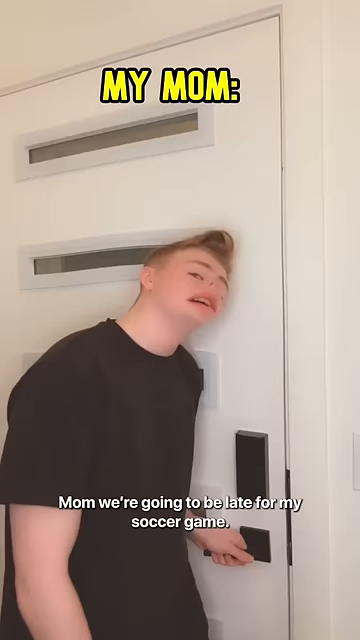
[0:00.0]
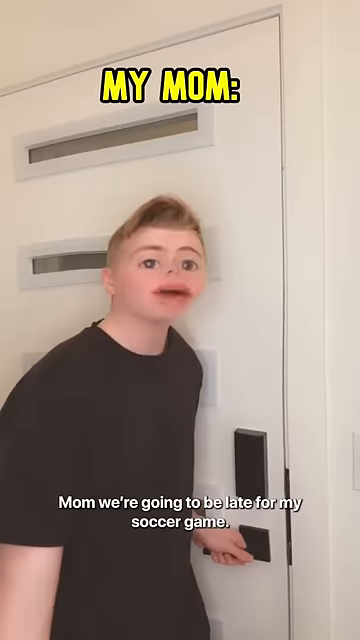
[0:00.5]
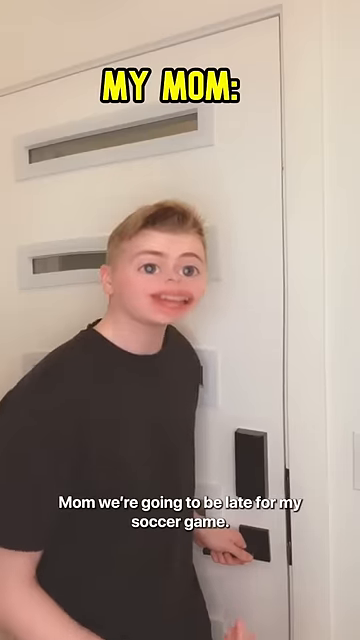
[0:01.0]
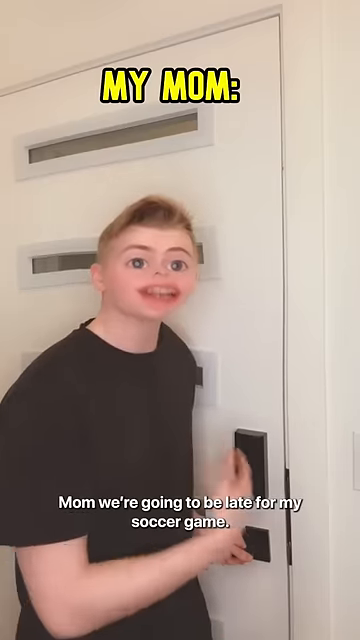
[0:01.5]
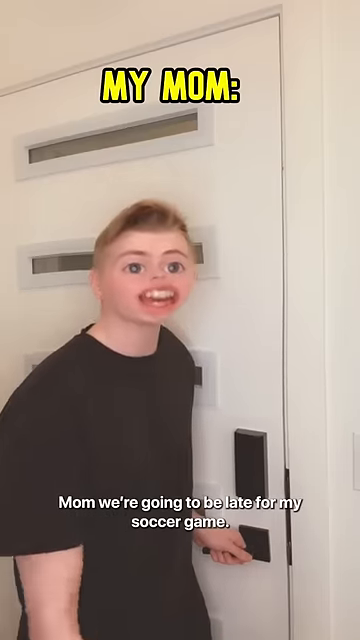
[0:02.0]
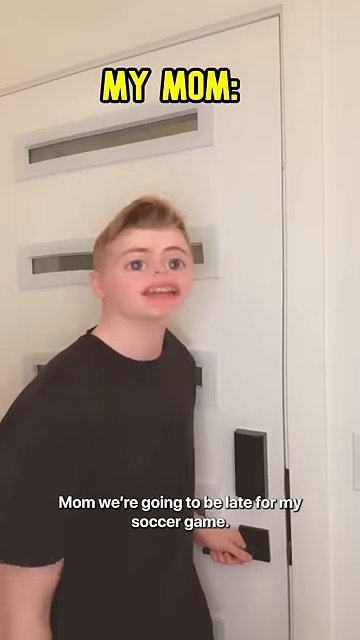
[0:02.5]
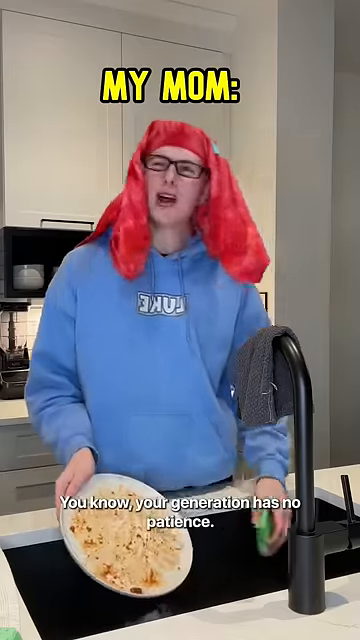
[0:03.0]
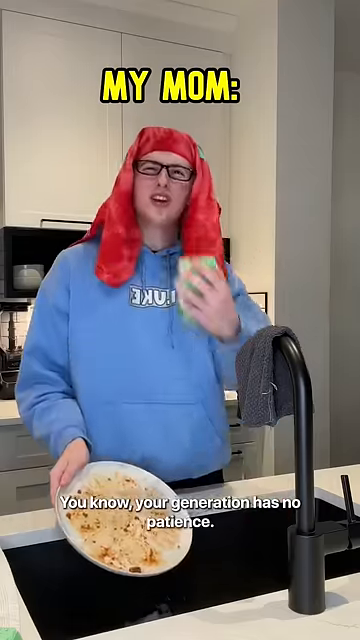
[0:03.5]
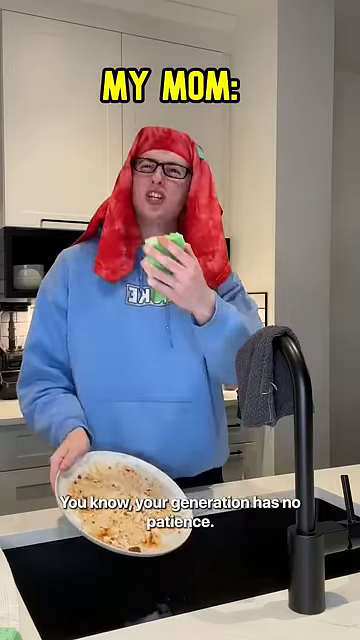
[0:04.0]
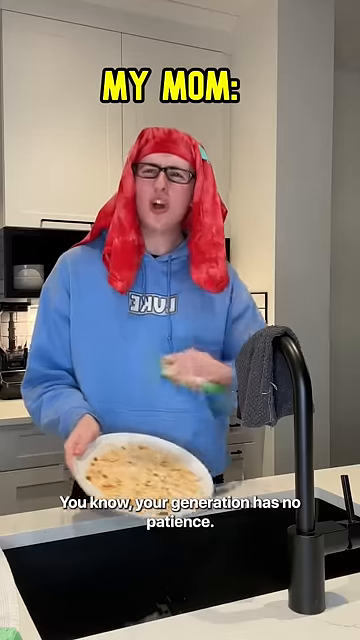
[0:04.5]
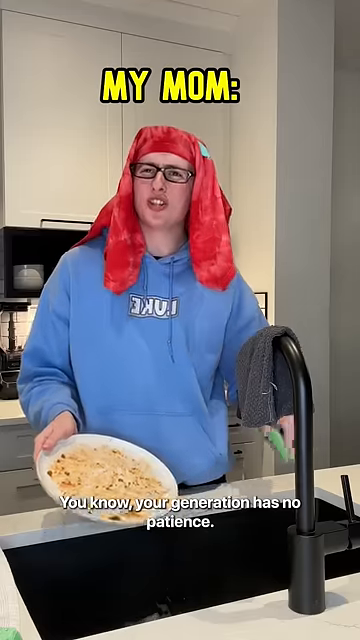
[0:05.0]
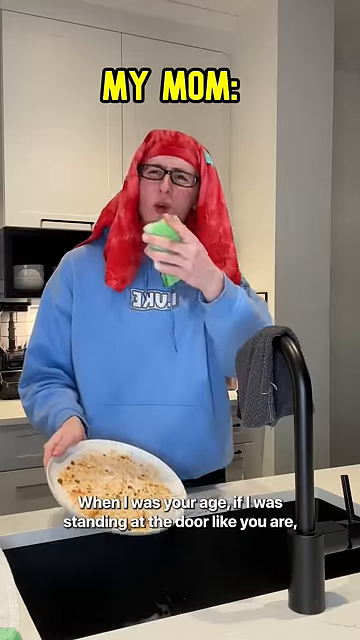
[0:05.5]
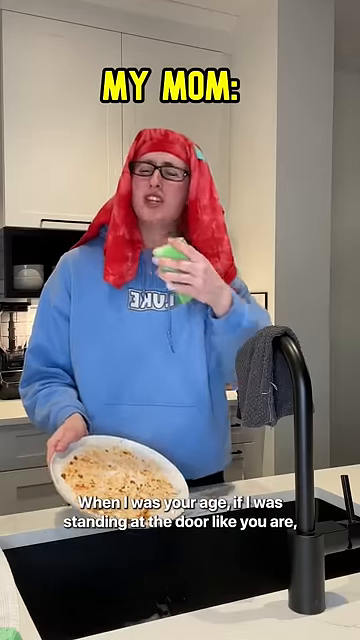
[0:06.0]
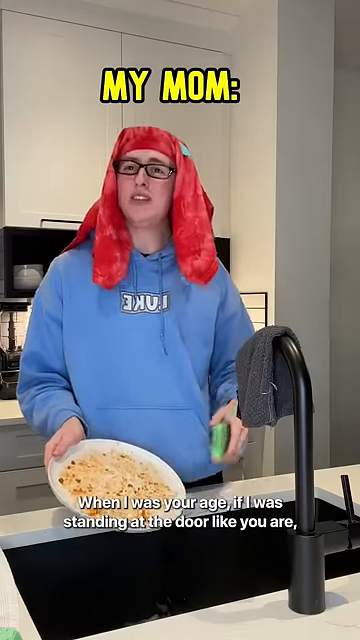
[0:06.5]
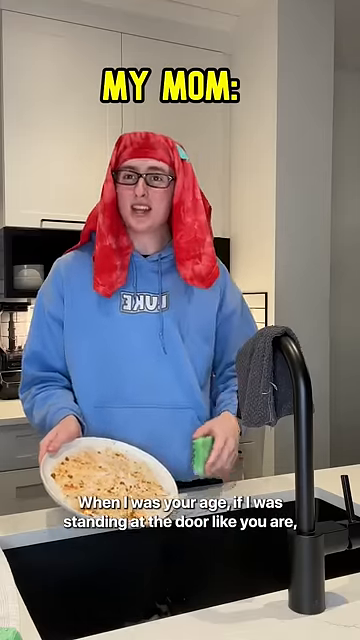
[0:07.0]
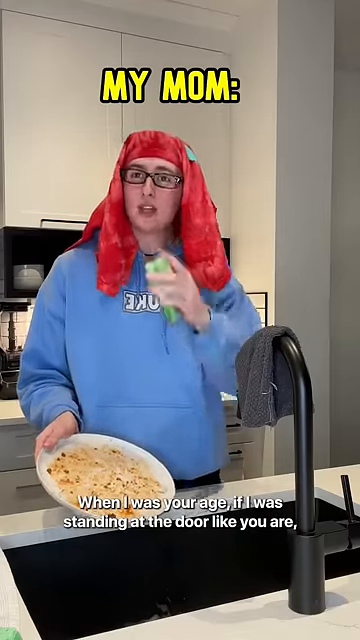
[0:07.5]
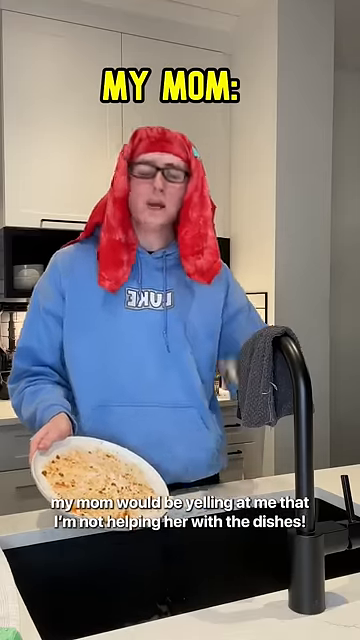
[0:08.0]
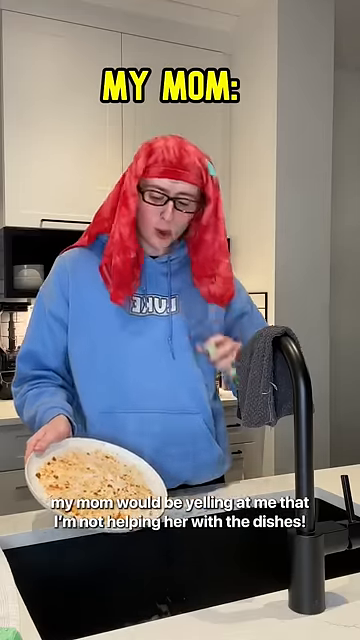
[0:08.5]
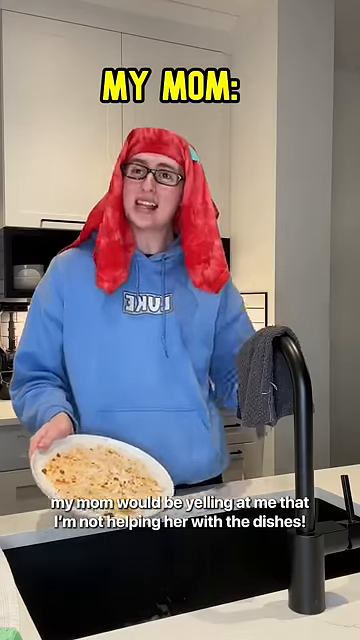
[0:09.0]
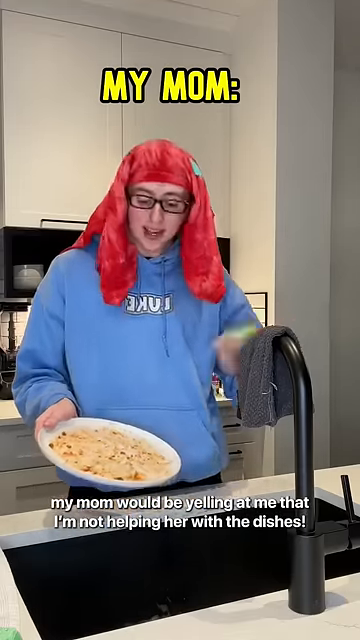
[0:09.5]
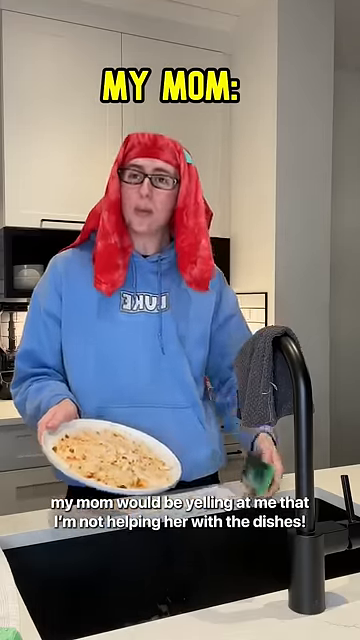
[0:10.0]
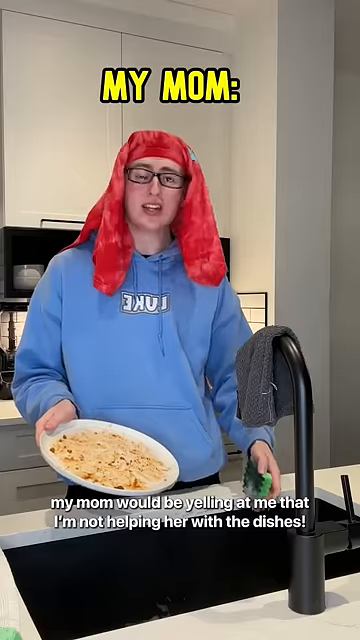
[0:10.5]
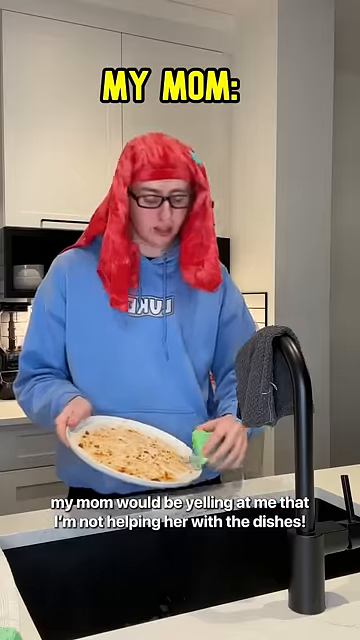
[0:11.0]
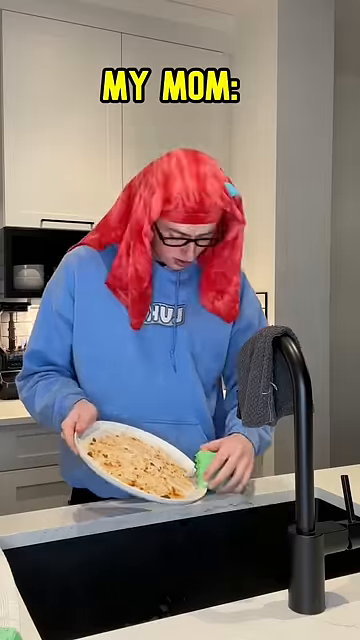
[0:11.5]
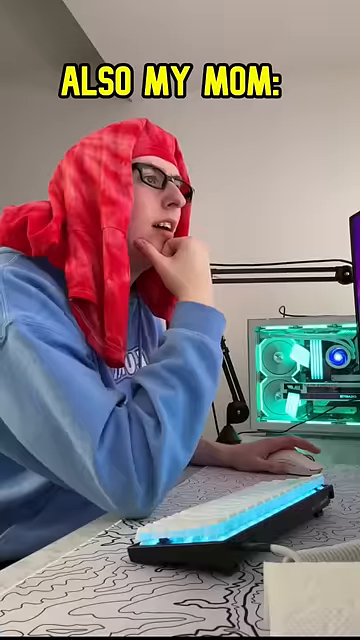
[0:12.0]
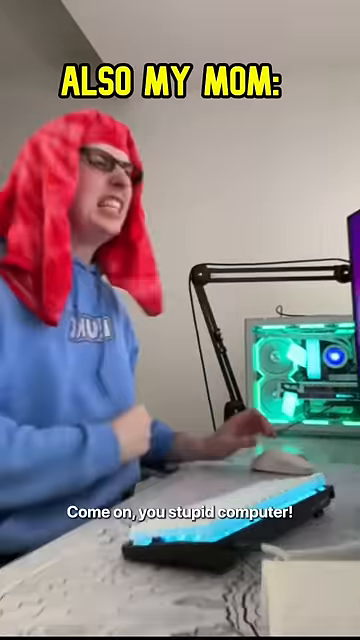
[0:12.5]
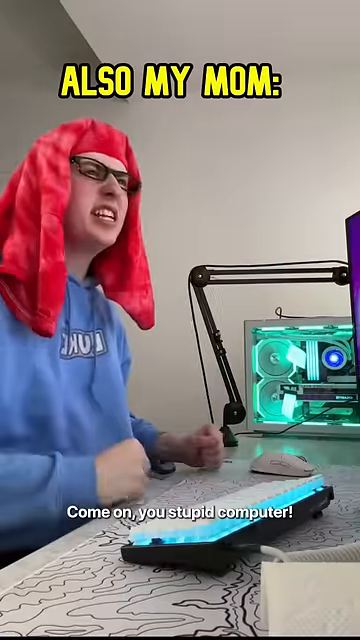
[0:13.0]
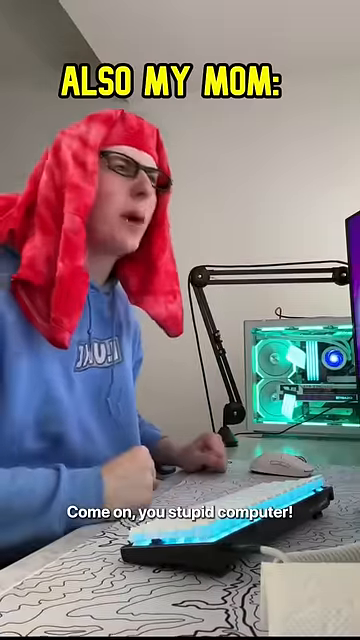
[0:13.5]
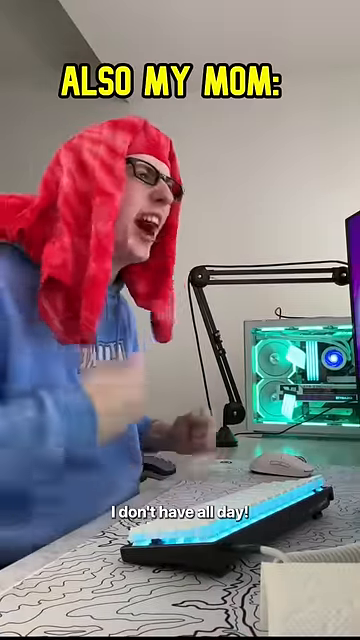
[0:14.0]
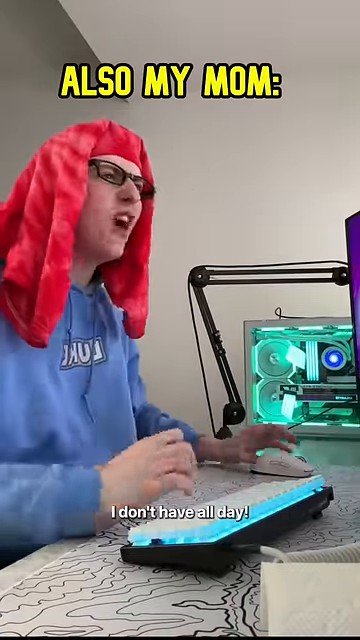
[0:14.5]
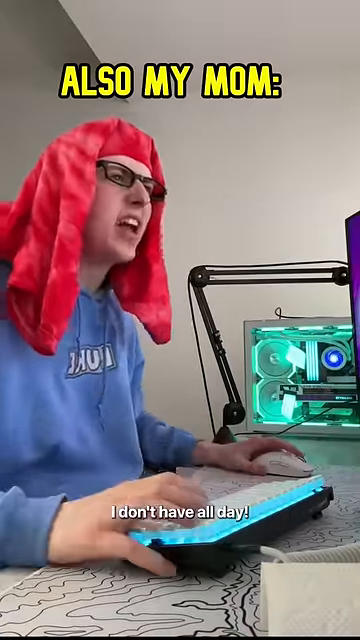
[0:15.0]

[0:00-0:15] In this skit, a young man plays two characters: himself and his mother. At the beginning, his head looks comically unreal, too short, with just enough room for eyes, eyebrows, barely a forehead, and a mouth, while the nose is almost not visible; it appears to be retouched or altered in some way. He is at the front door, about to open it, wearing a black T-shirt, and he looks like a teenager. Text at the bottom reads "Mom, we're going to be late for my soccer game." The scene then cuts to his mother in the kitchen, who appears to be played by him as well. She is washing dishes and has long red hair, glasses, and a pullover hoodie. She scolds him, saying that when she was his age, she was standing at the door like he is and her mom would be yelling at her for not helping with the dishes. Next, she is at a computer desk, with him playing her, and the character smashes a fist against the desk. On the desk are a lighted keyboard, a lamp, and a mouse sitting there as well, and a hard drive is open with neon lighting inside. She scolds the son again.